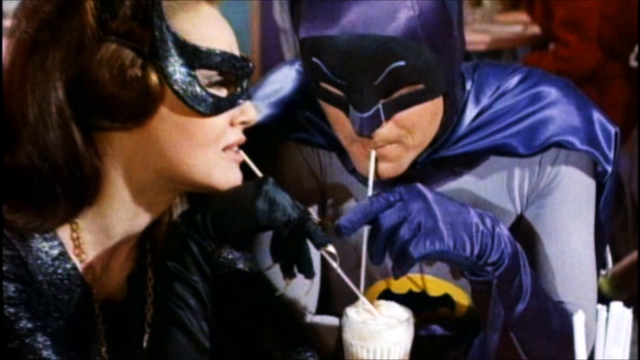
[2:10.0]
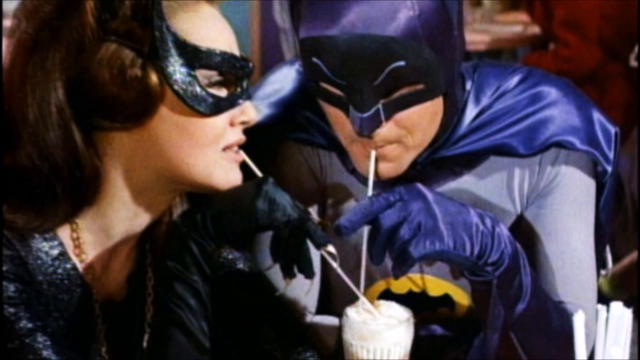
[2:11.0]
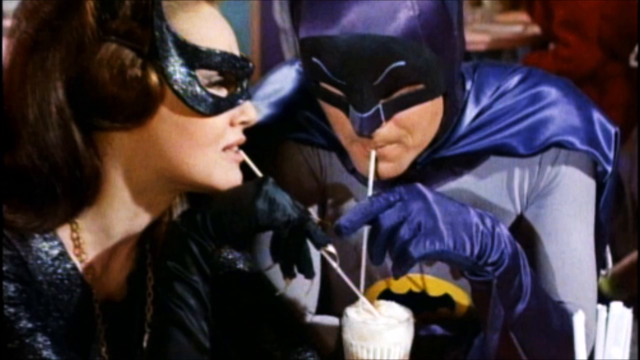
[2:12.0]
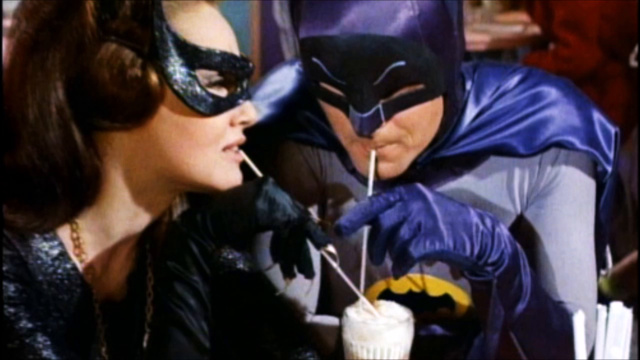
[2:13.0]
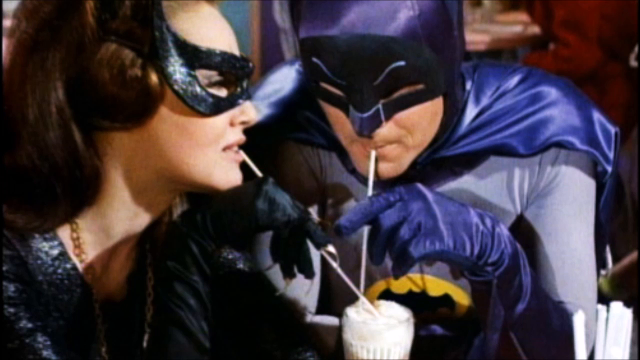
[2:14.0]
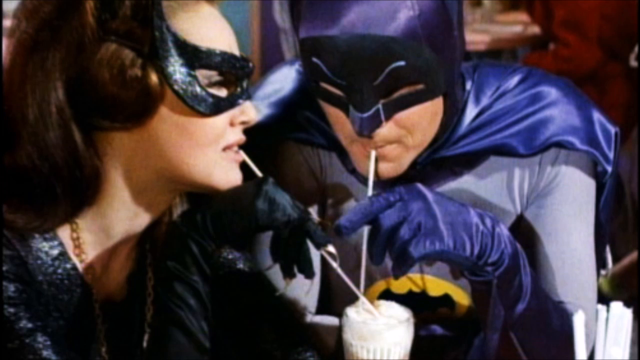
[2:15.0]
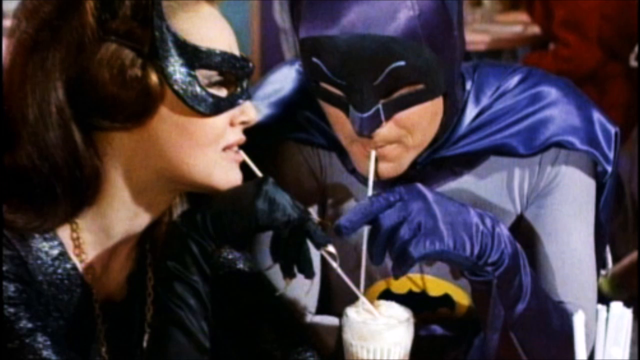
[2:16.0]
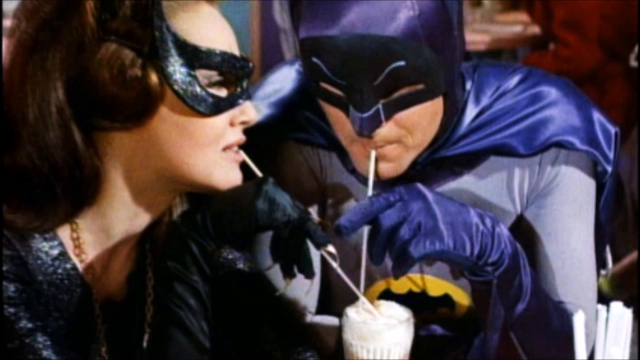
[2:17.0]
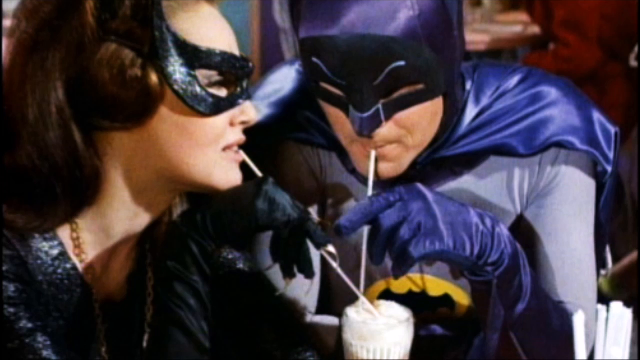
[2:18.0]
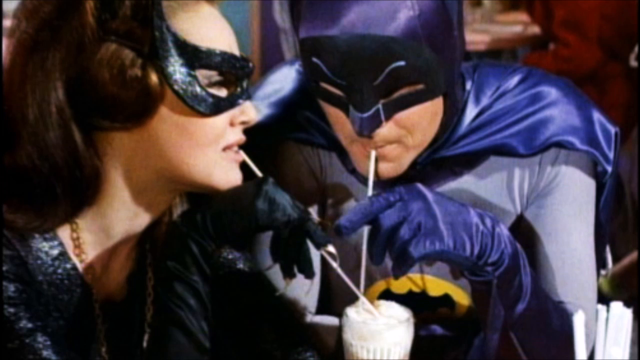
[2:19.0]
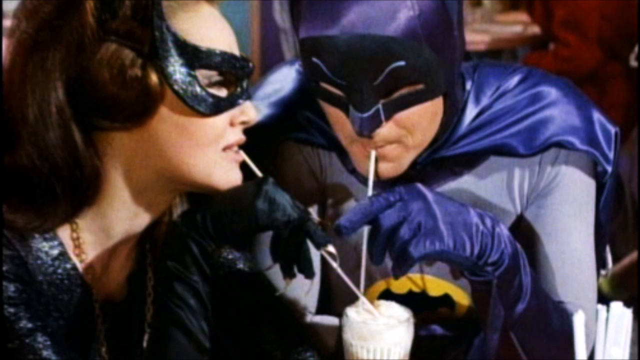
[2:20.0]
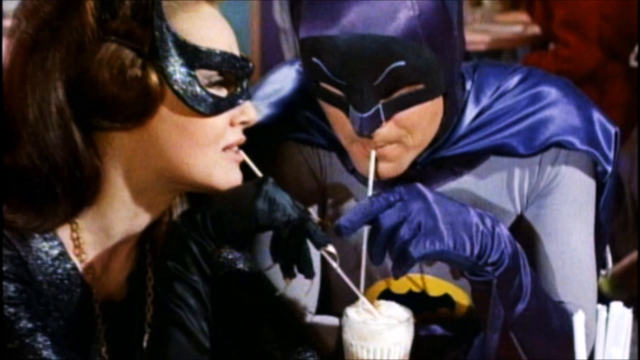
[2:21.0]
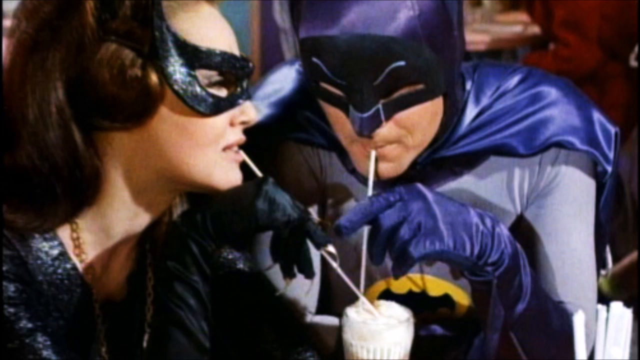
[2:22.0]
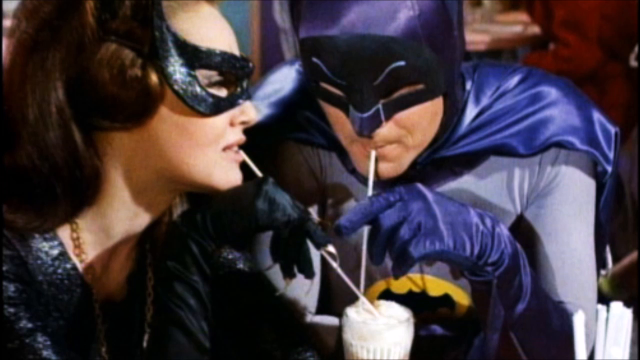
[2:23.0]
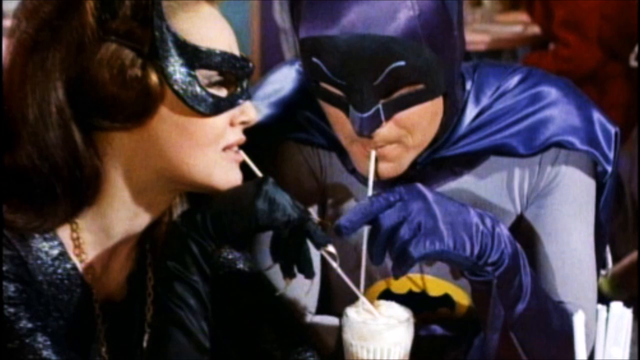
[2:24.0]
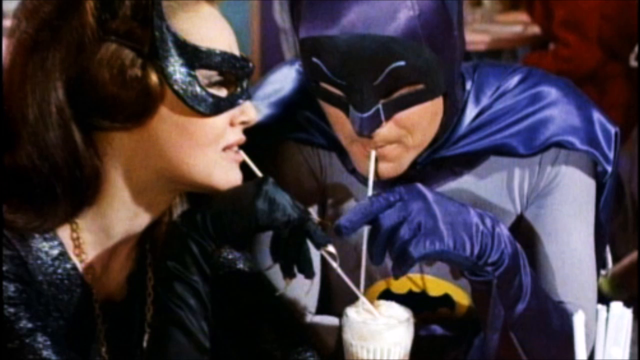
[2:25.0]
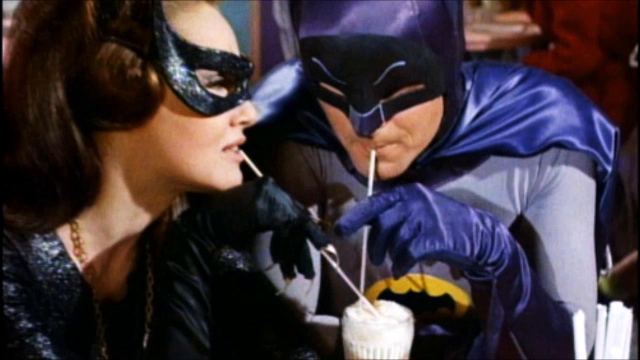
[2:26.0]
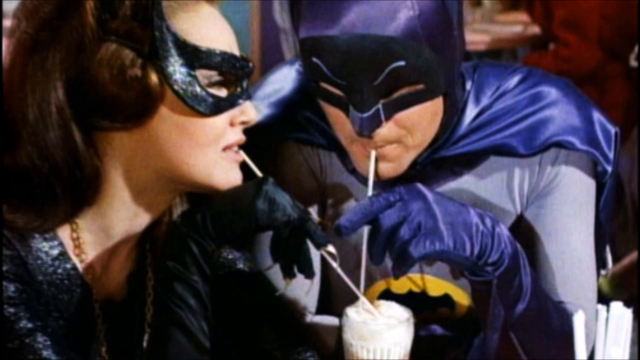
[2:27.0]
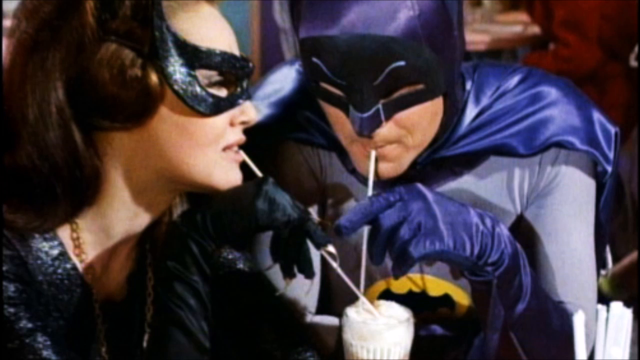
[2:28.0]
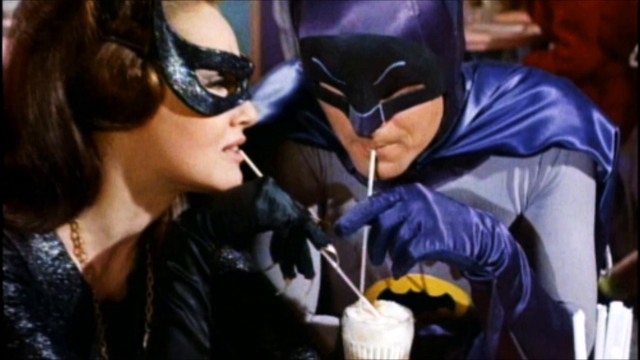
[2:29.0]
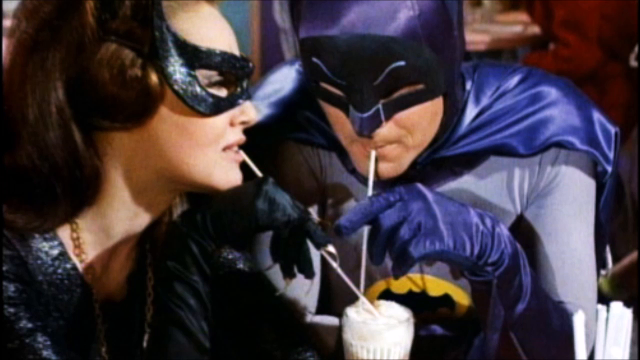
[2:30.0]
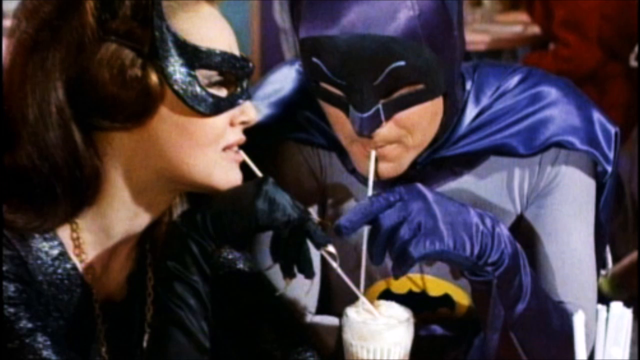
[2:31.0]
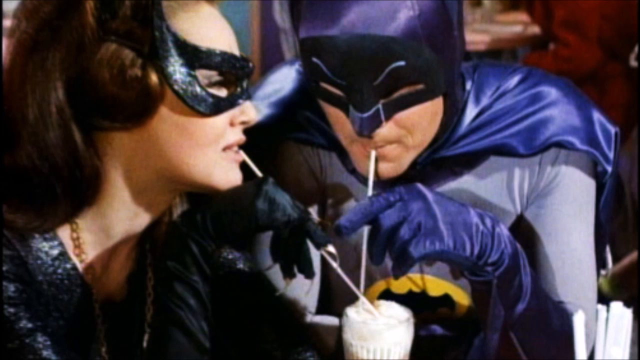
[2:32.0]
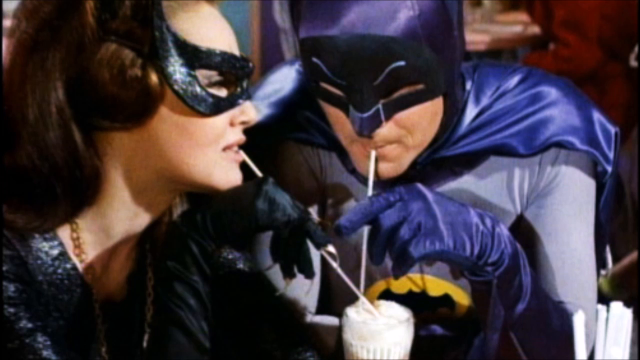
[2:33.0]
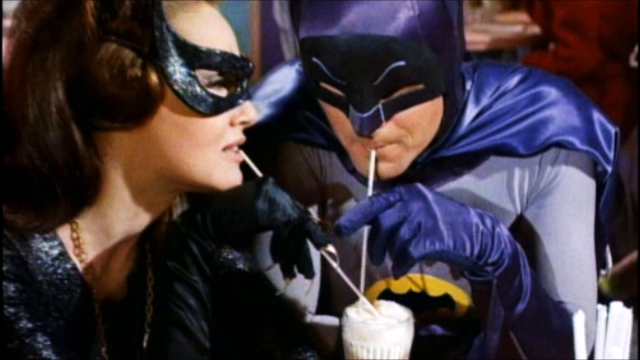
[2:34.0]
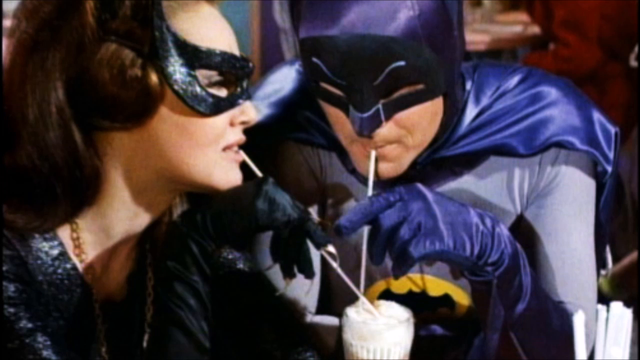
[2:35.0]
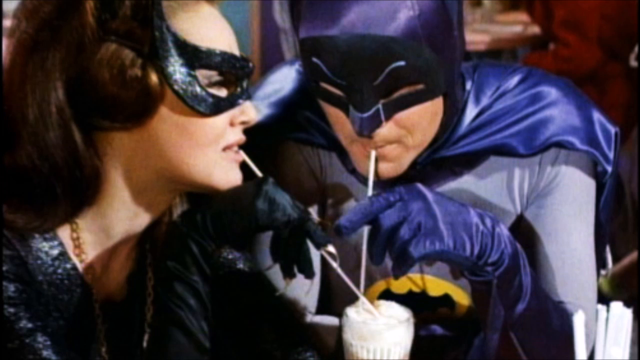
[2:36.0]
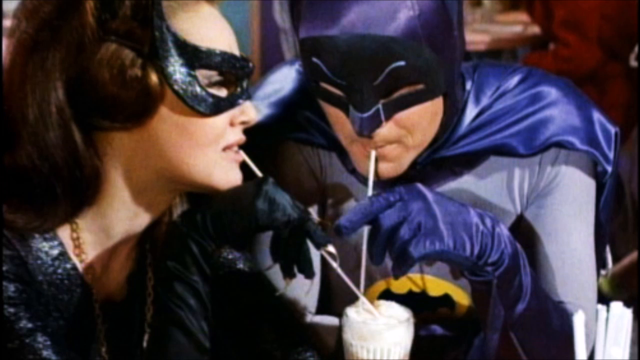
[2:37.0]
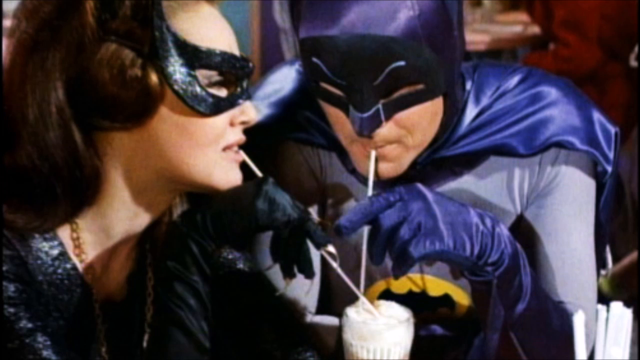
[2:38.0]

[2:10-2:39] The two heroes continue sipping the milkshake. In the background there is a maroon wall, and there seems to be a shelf with a book on it. Between the man's and the woman's heads the background is purple, and there seems to be a framed photo in blue. On the left side of their table there seems to be a glass filled with straws. The woman wears a necklace and black clothes, with a black glove on her left hand. The man's mask covers from his nose up to his forehead and head. The Superman costume he wears is silky and shines brightly.